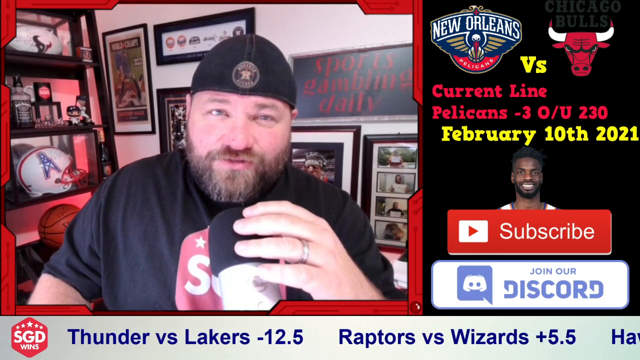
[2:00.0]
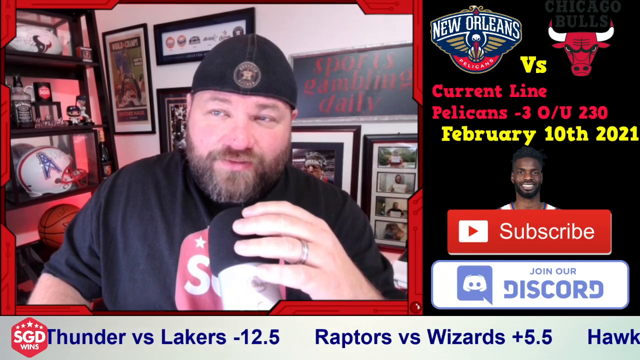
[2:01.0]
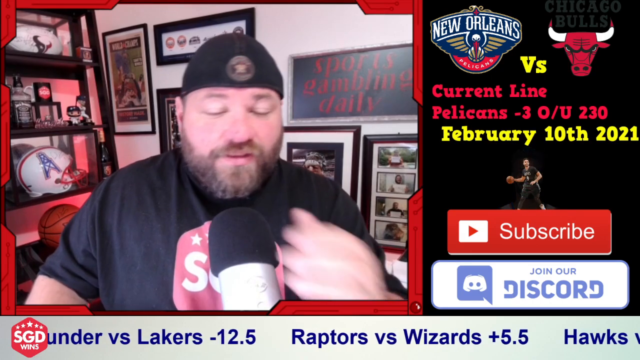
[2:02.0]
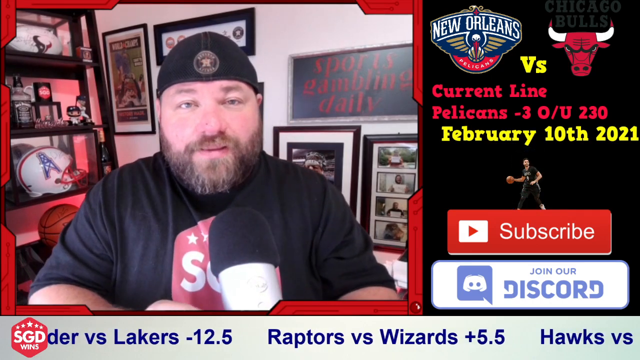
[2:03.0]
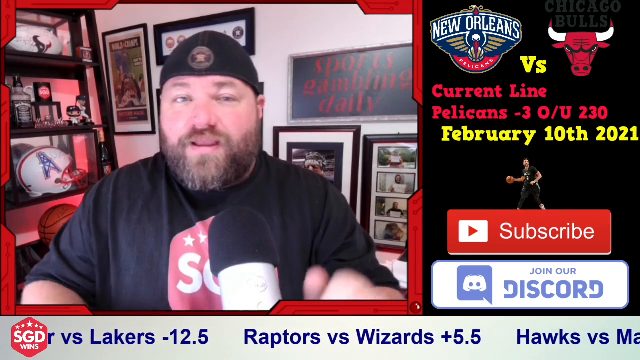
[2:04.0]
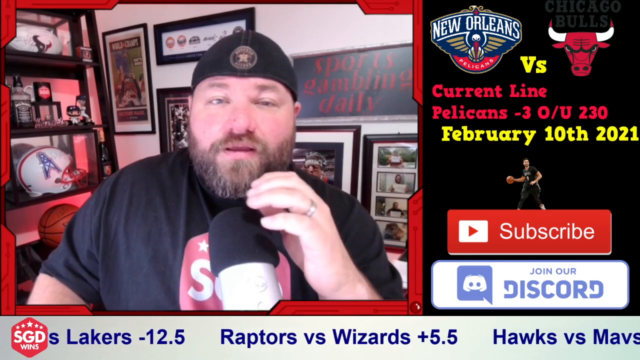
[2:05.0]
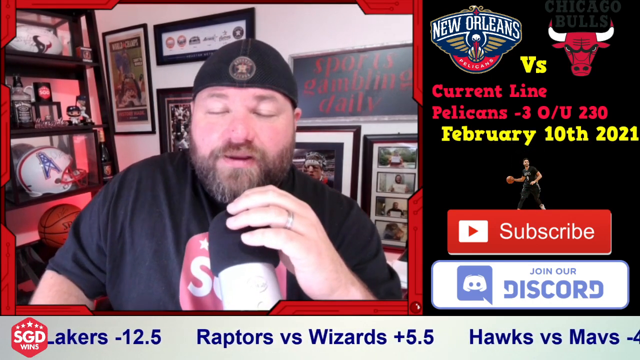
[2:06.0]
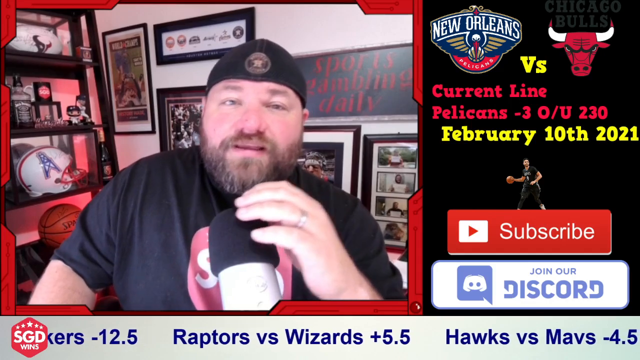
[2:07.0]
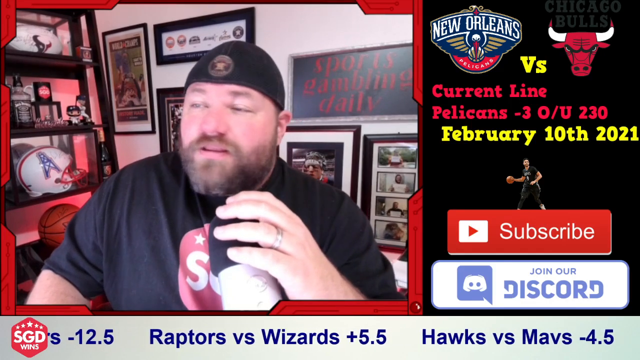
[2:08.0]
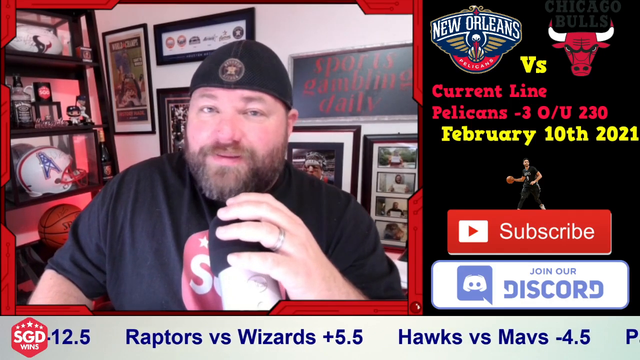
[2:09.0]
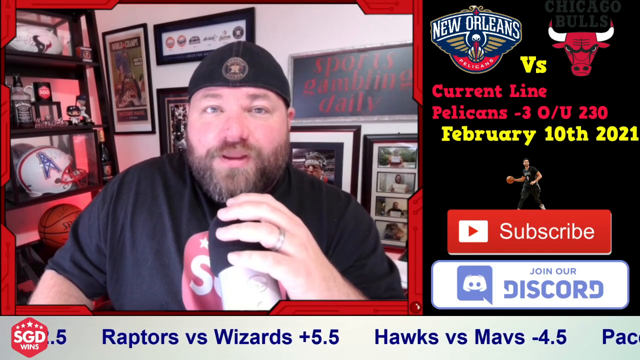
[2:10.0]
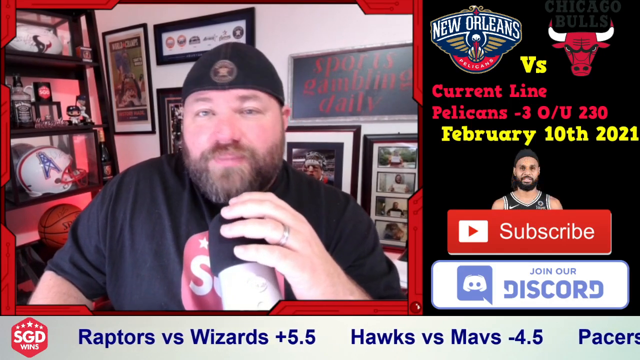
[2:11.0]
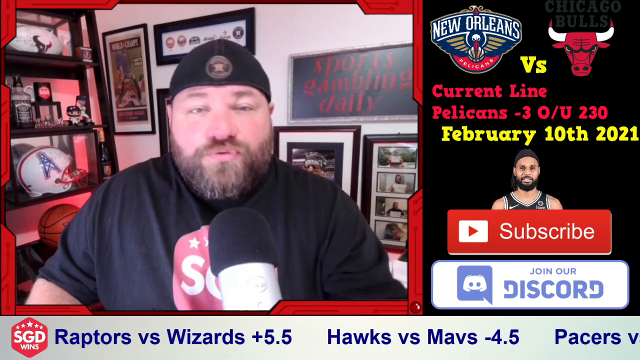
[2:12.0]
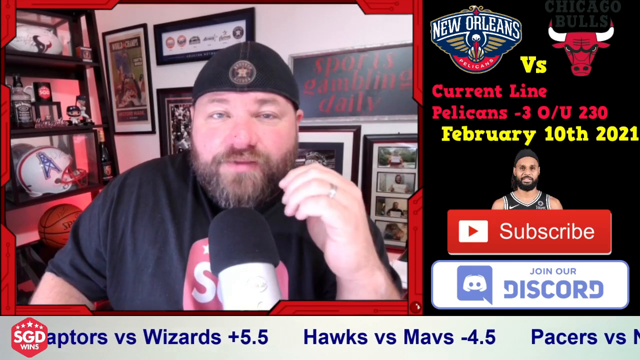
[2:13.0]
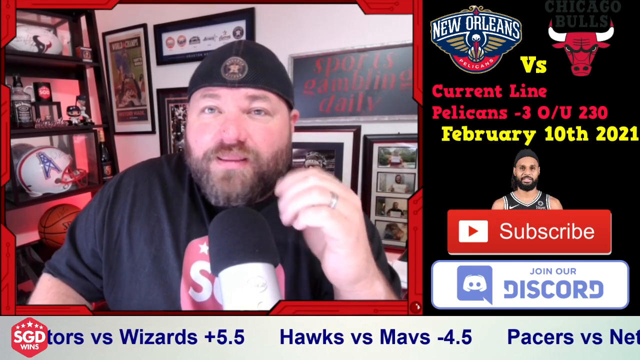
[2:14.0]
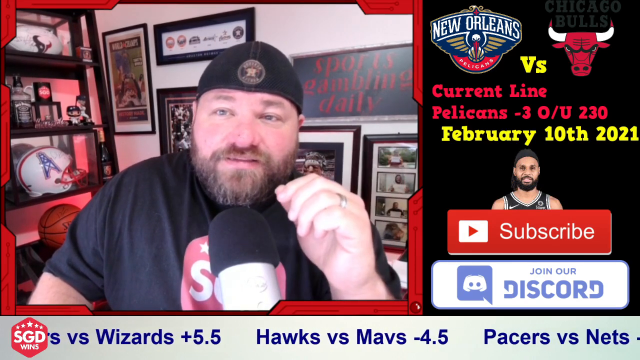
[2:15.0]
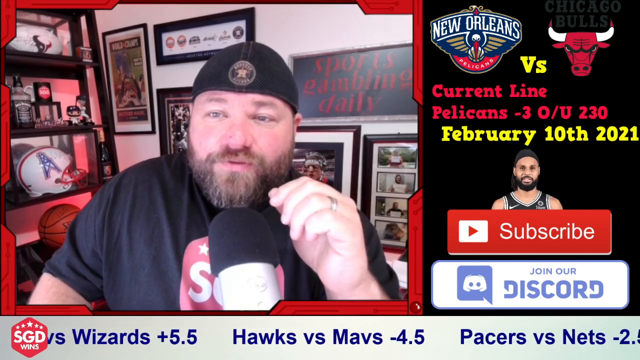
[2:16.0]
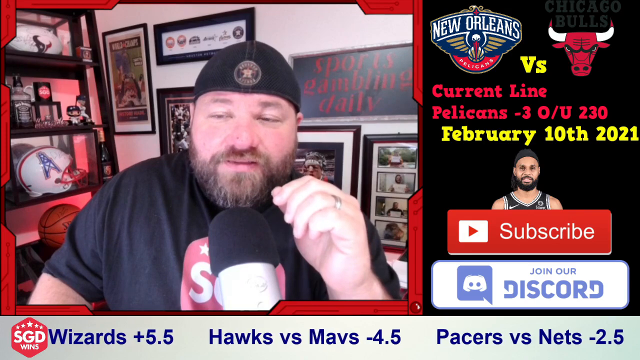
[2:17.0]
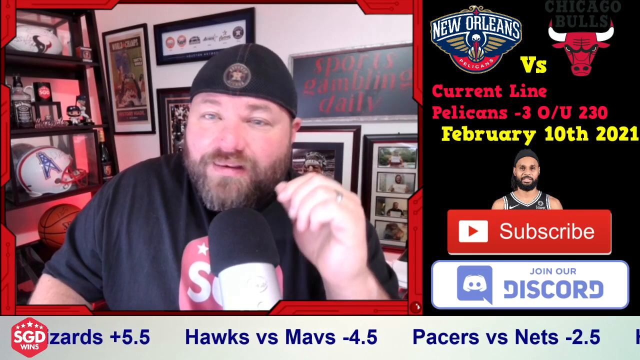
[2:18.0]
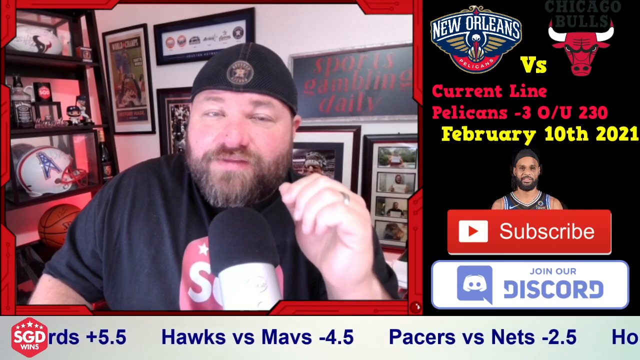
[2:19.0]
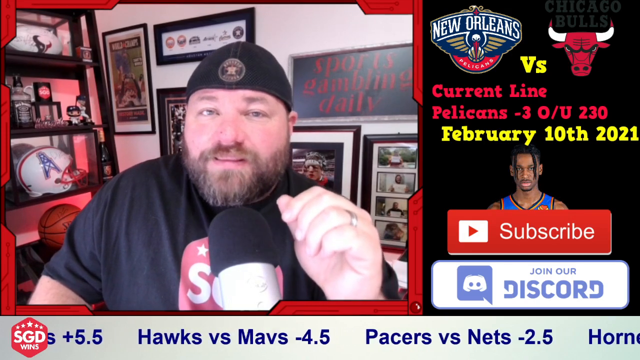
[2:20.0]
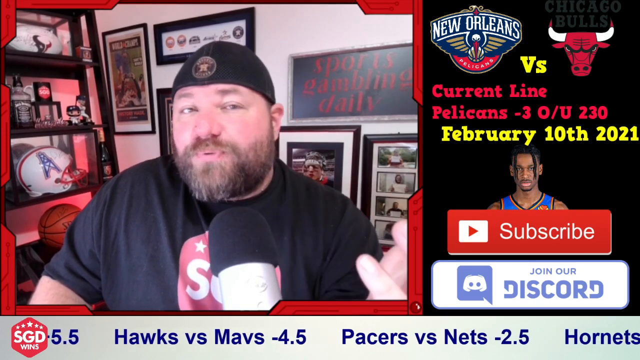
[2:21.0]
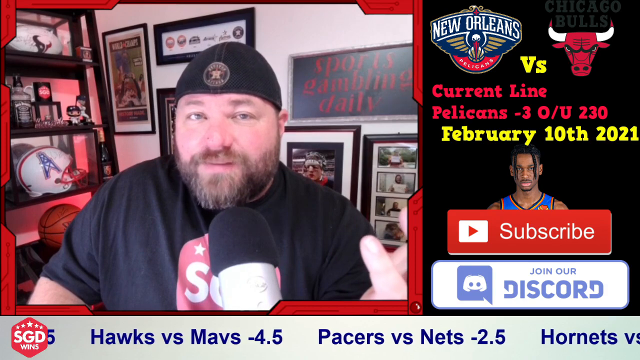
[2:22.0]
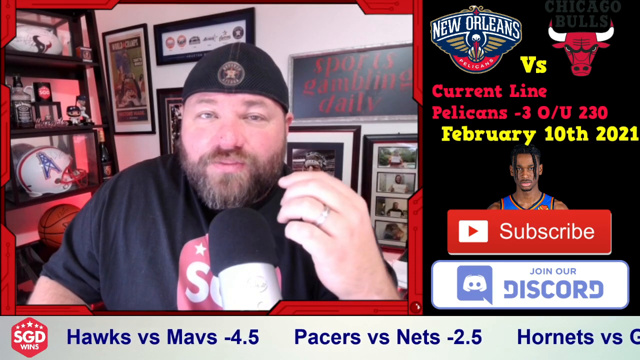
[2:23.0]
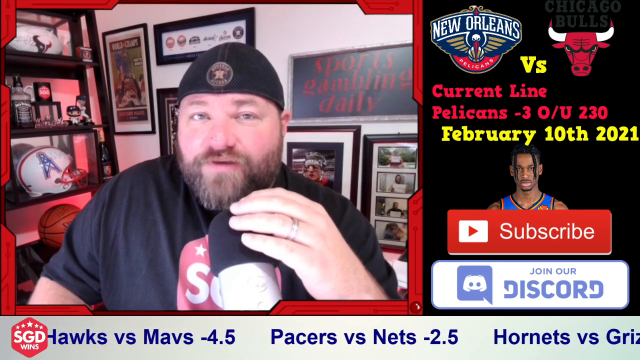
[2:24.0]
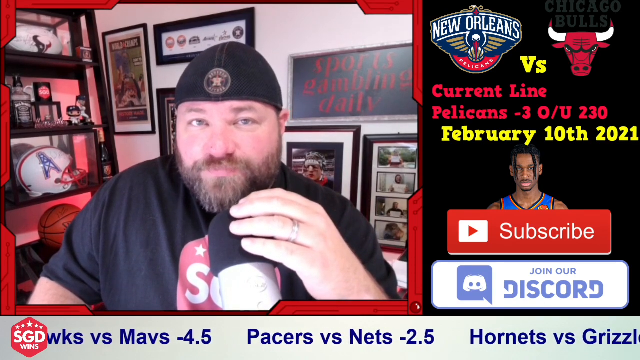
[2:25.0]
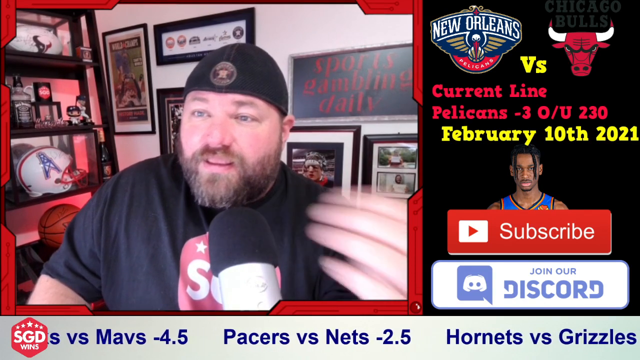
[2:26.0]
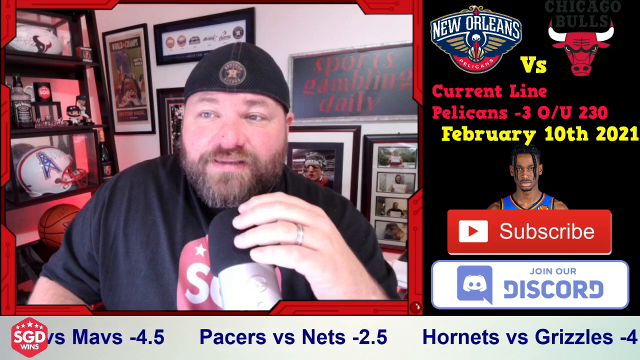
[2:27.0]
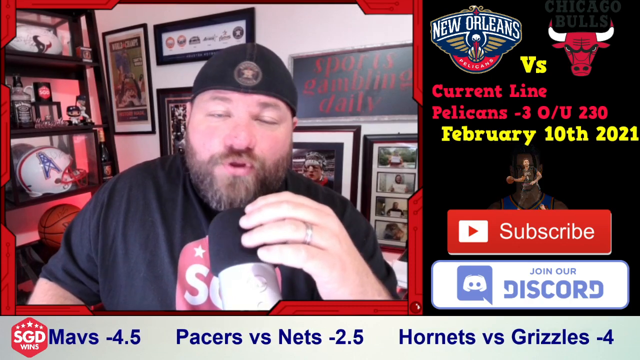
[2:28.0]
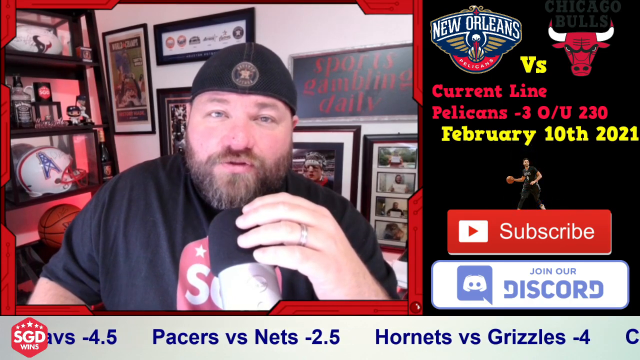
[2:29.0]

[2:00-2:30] A man talks or vlogs. In the background there is a Houston Texans helmet or football and a Houston Oilers football helmet, along with other photos and items on the wall behind him. He talks with his hand at times, and when he puts his hand up a wedding ring is visible on his left ring finger. On the right, text reads "New Orleans Pelicans versus" with a bull for the Chicago Bulls; in red print it says "Current Line Pelicans-3 O-U 230" and in yellow print "February 10, 2021". Below the date, small pictures of an NBA player change continually, and below that there is a subscribe button and a button that says "join our Discord".